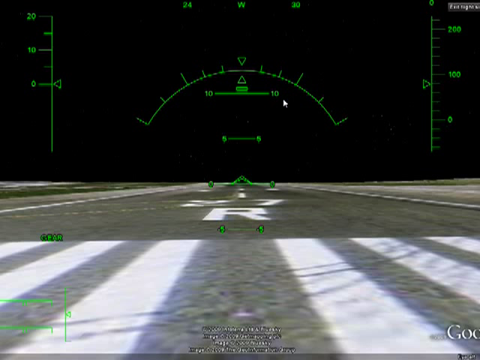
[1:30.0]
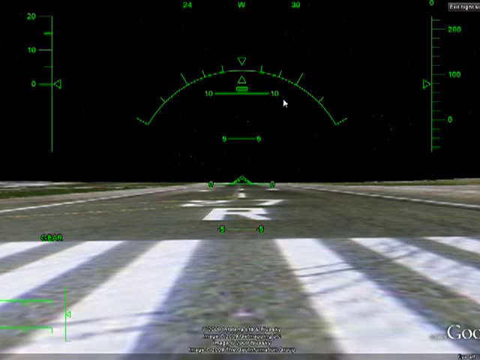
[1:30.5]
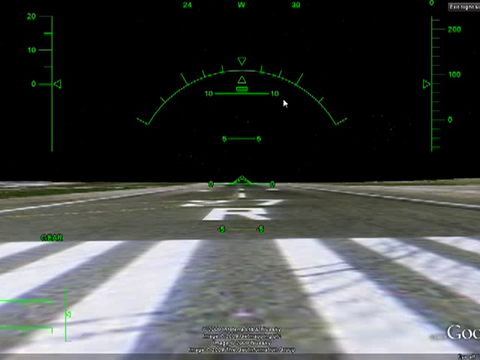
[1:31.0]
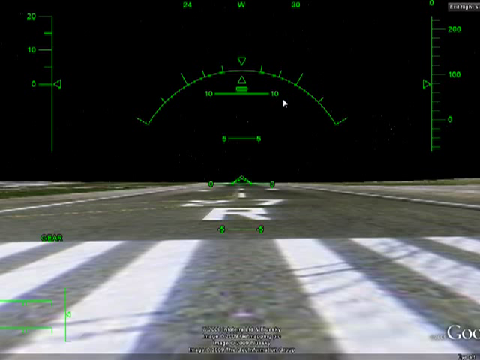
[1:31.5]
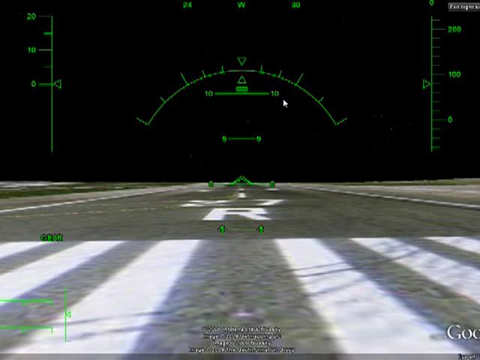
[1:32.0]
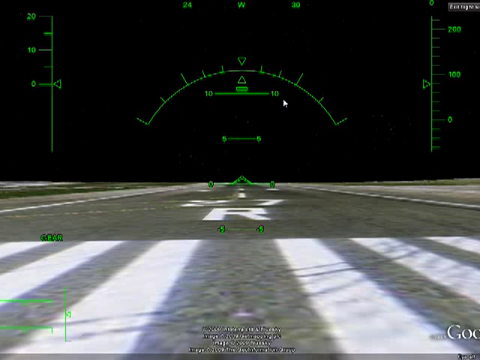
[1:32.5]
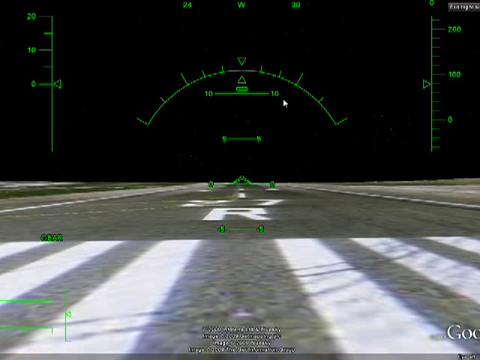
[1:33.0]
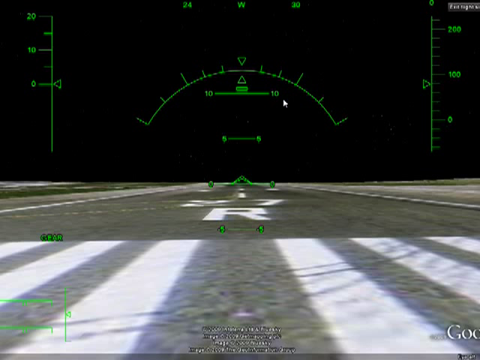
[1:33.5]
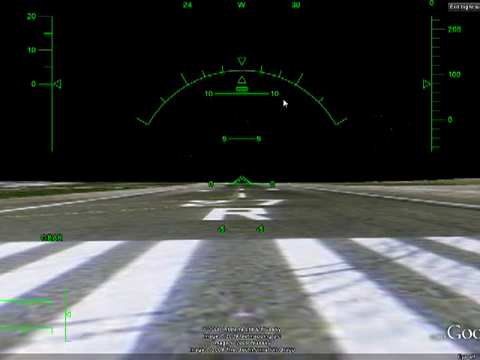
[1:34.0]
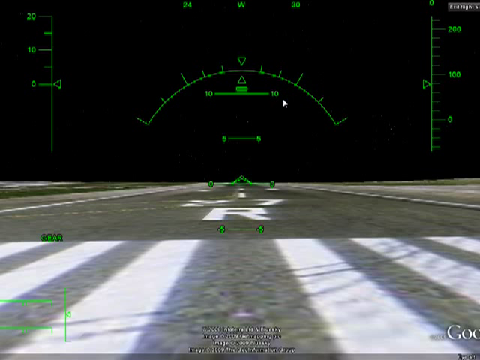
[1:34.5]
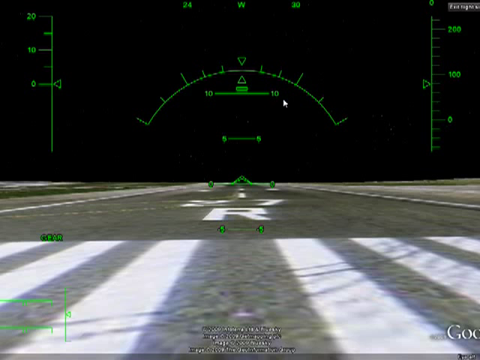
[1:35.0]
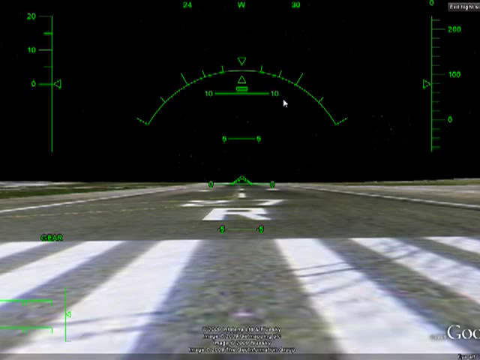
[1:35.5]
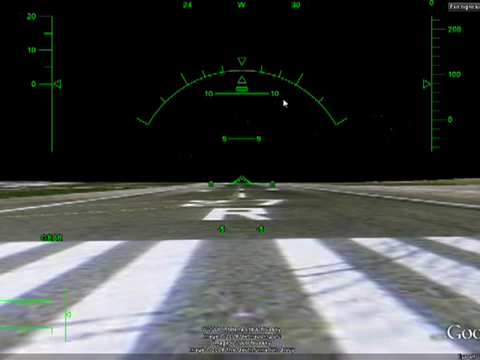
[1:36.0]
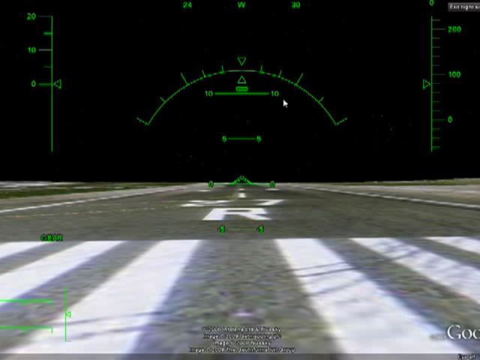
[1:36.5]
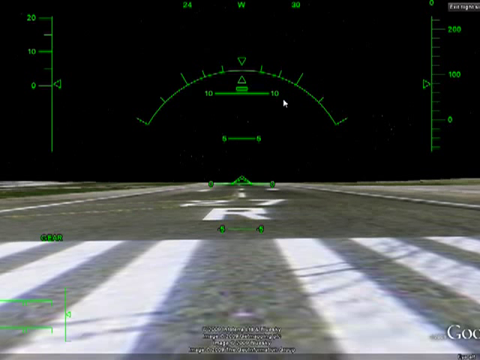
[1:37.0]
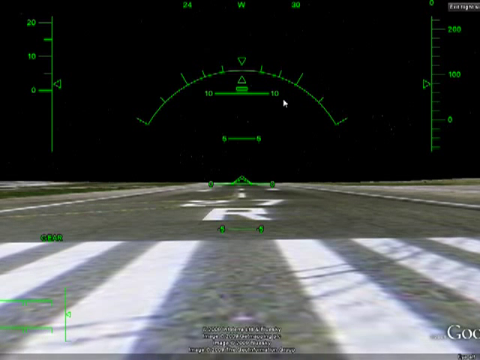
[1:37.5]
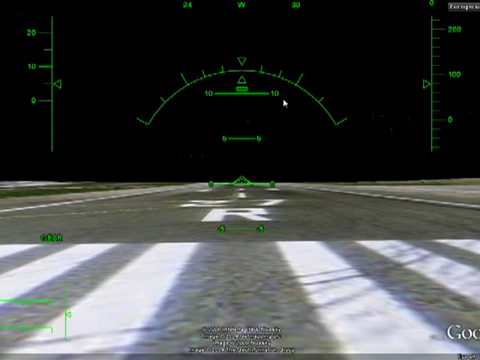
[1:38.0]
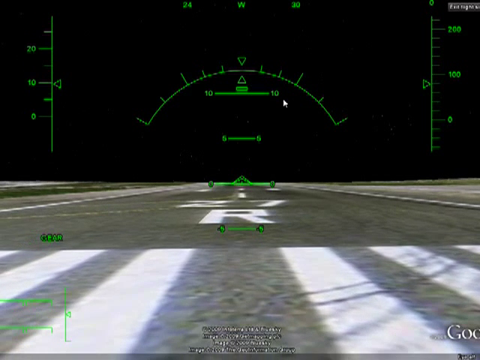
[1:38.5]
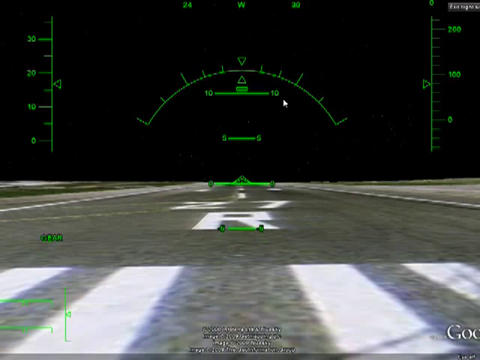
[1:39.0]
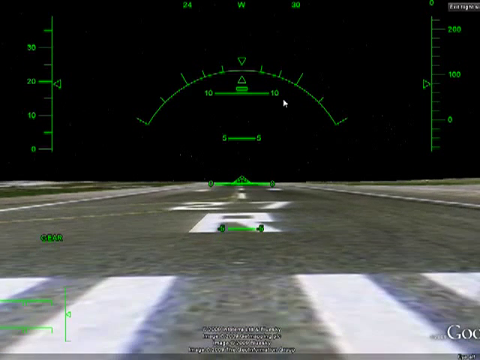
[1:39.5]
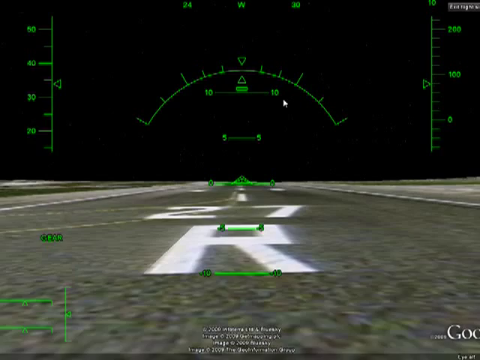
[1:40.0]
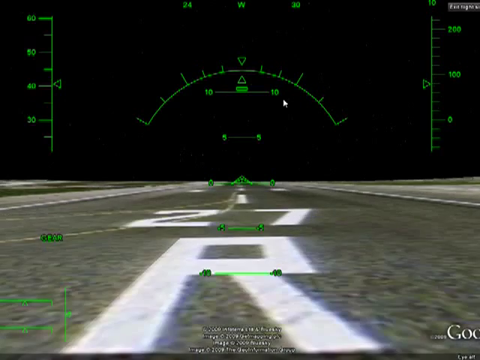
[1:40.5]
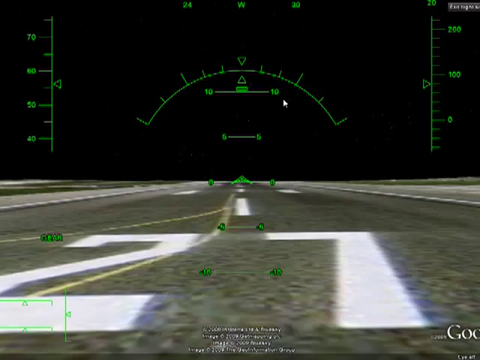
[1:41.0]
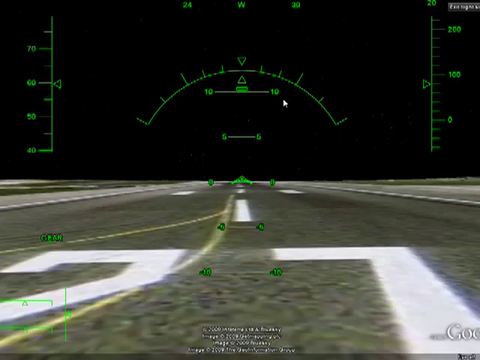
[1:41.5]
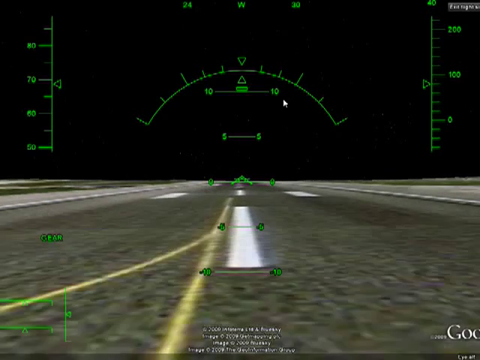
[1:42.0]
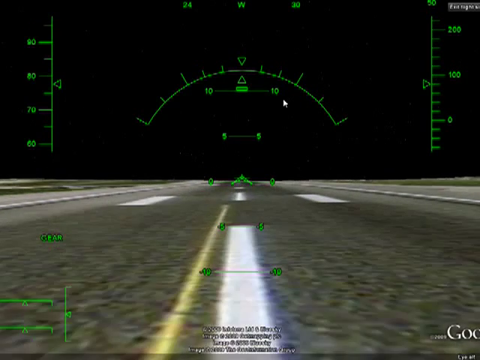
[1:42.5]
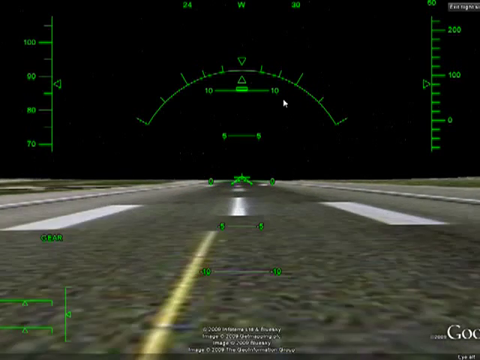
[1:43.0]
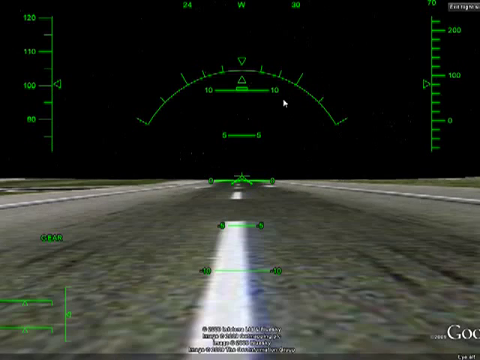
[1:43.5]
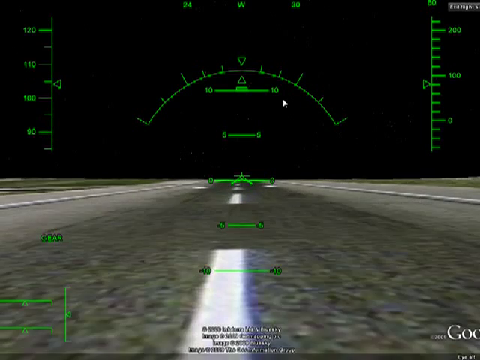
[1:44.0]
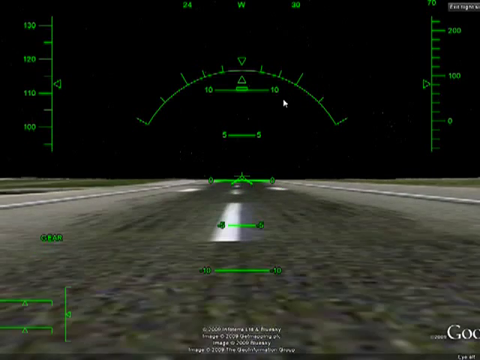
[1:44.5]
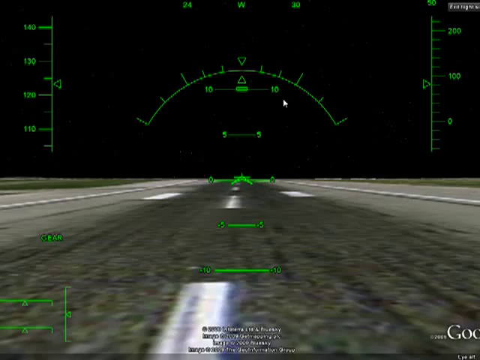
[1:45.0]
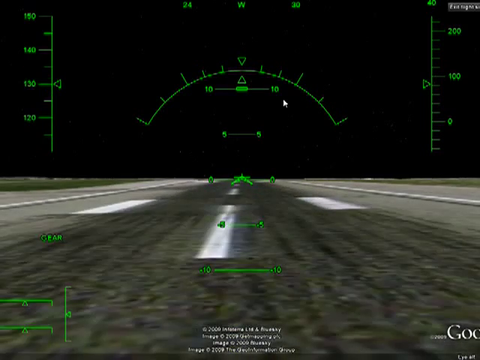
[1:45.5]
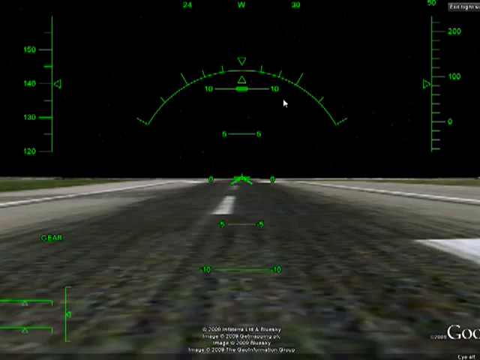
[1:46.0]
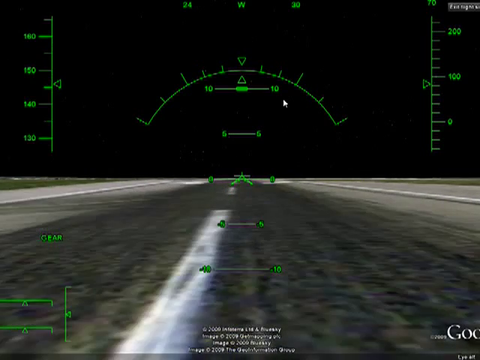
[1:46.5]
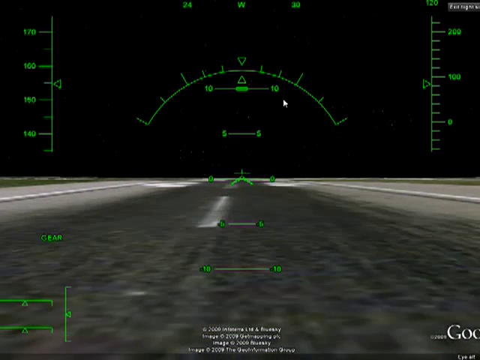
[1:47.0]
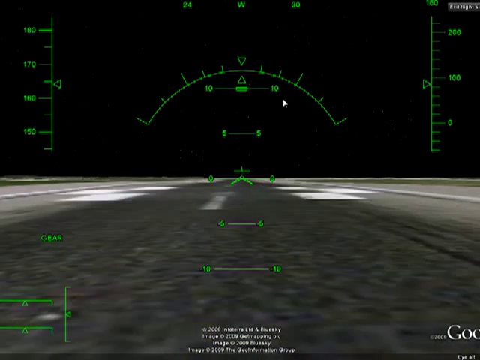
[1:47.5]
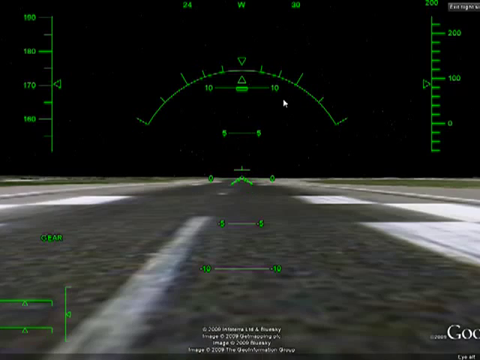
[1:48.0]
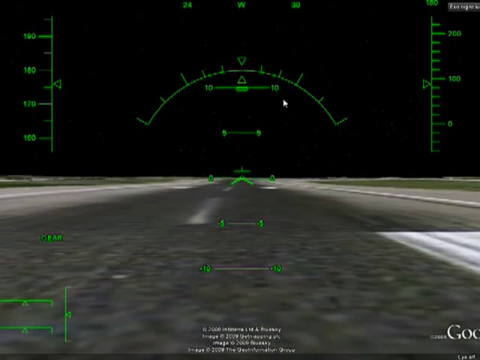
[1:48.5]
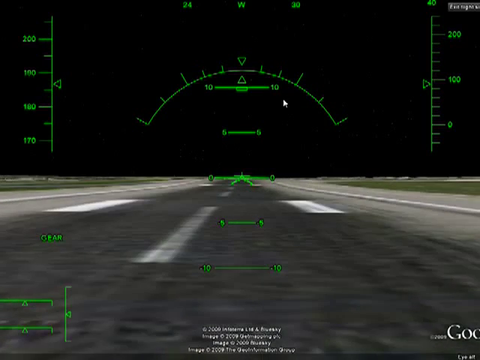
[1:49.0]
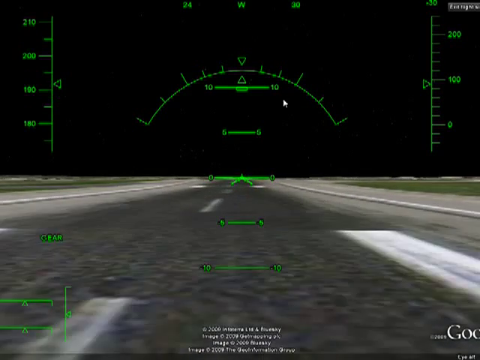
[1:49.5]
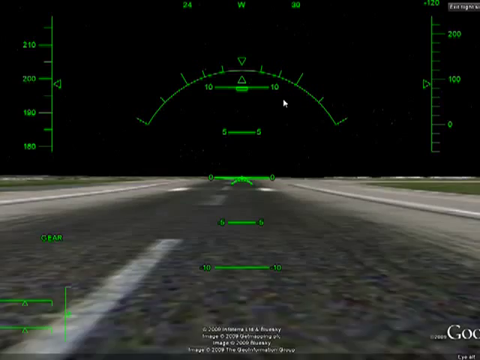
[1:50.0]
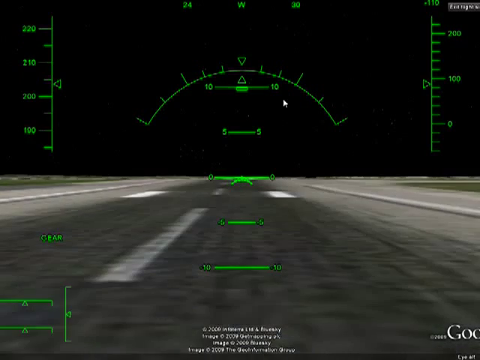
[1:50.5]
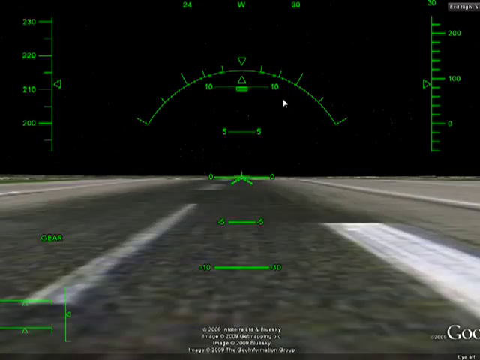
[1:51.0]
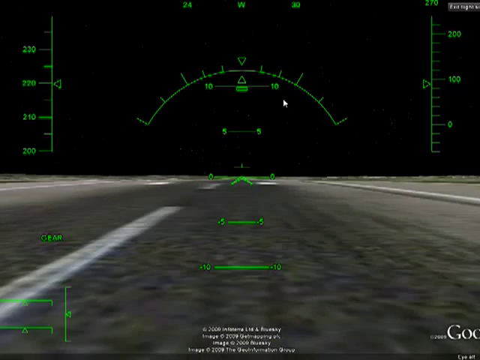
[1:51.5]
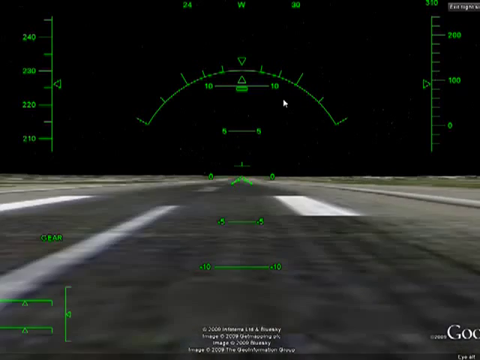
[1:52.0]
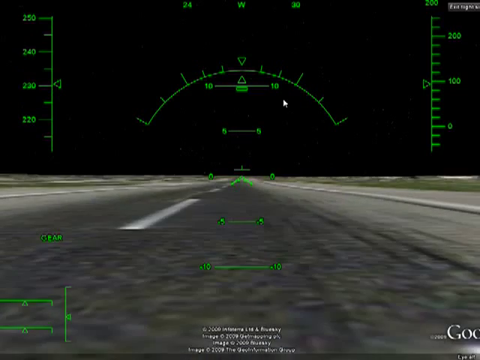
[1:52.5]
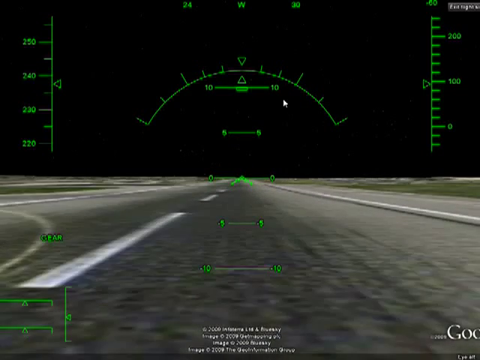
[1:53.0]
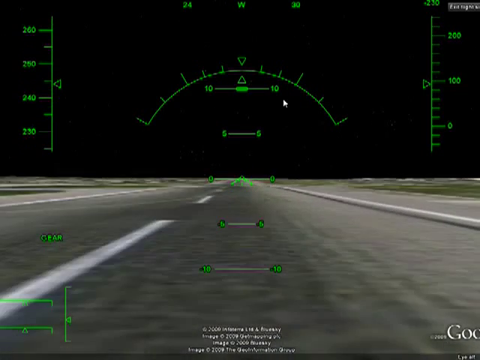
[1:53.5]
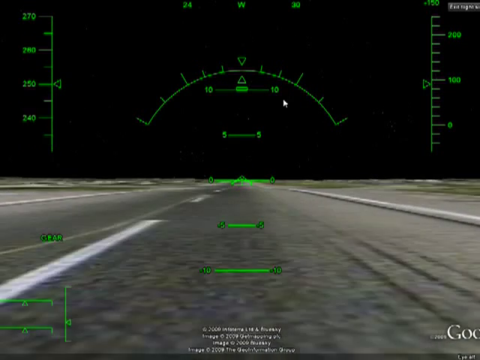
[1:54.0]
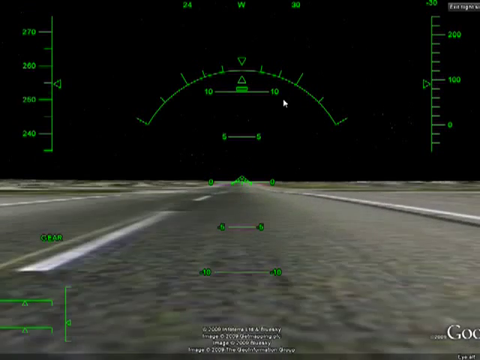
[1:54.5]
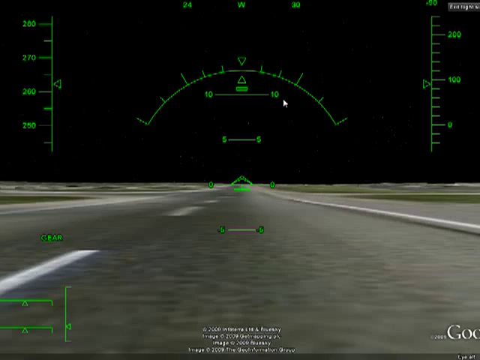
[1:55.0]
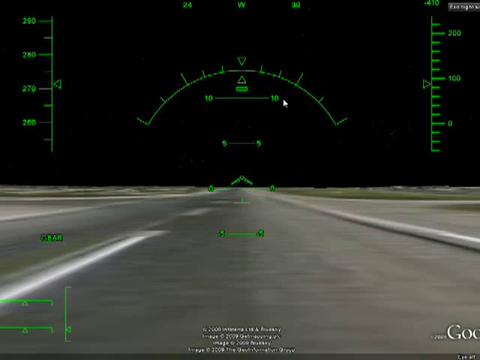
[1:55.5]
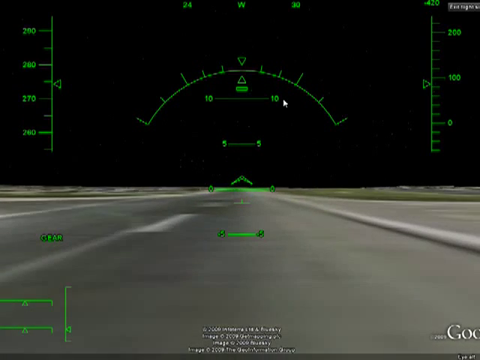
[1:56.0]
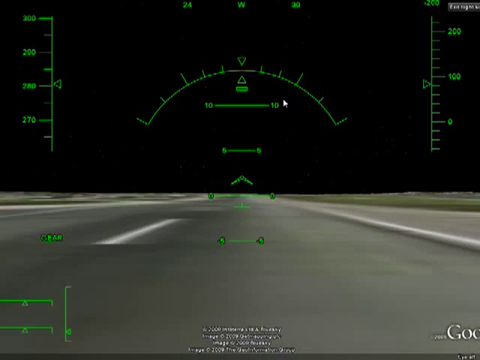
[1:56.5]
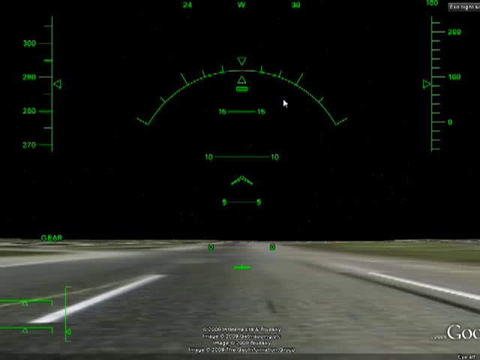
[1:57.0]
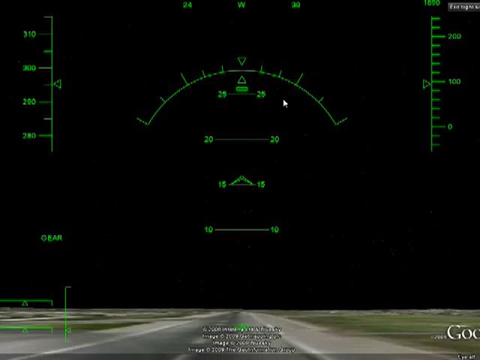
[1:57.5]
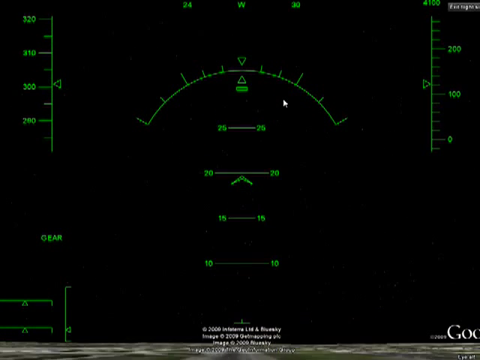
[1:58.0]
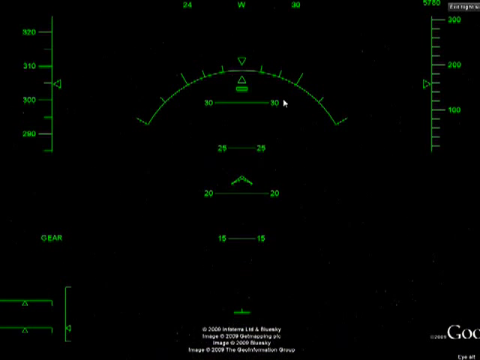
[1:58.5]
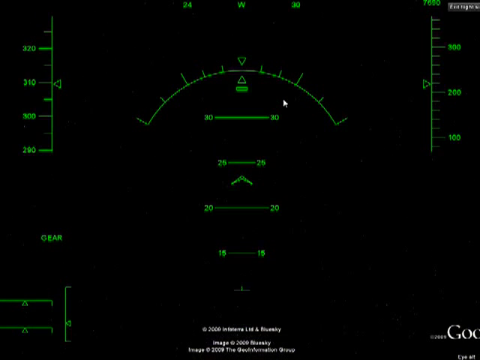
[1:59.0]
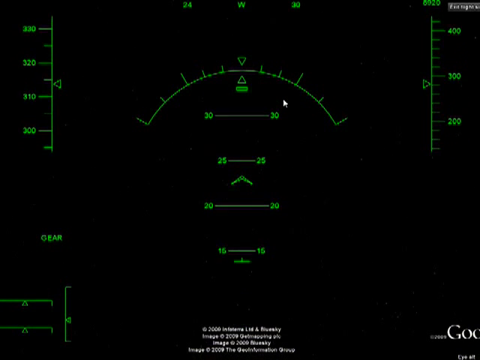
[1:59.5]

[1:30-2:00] The plane is still on the runway, which looks like a pixelated real-life image, with the painted R and white lines going up the middle of it. The plane begins to move, simulated by the lines moving on the digitally generated tarmac. A number on the left-hand side of the screen, apparently the speed, climbs from zero all the way up to 300, when the plane takes off. As it takes off, the screen kind of goes black to represent the sky; it is unclear whether the sky is simply not generated or is a night setting. The footage appears quite laggy.